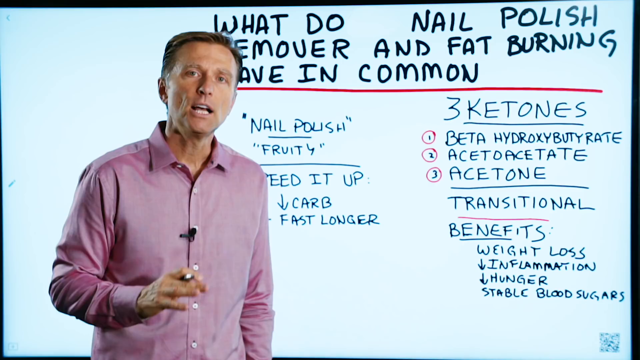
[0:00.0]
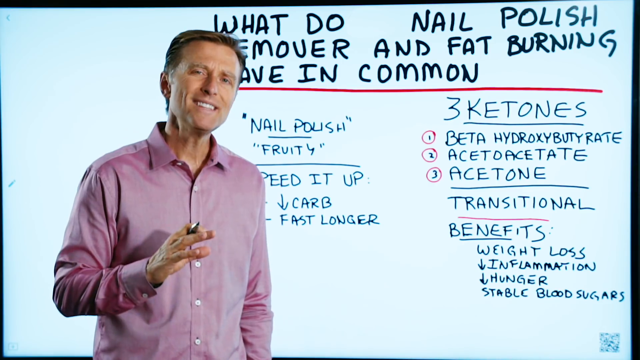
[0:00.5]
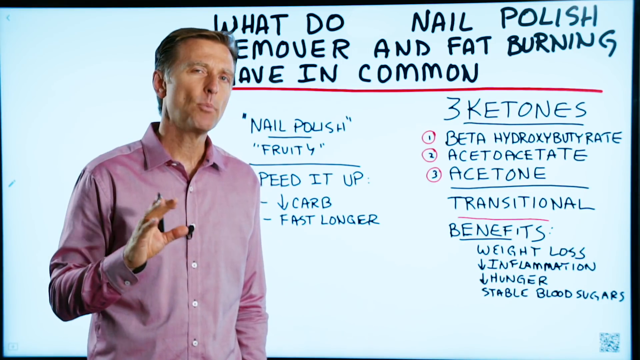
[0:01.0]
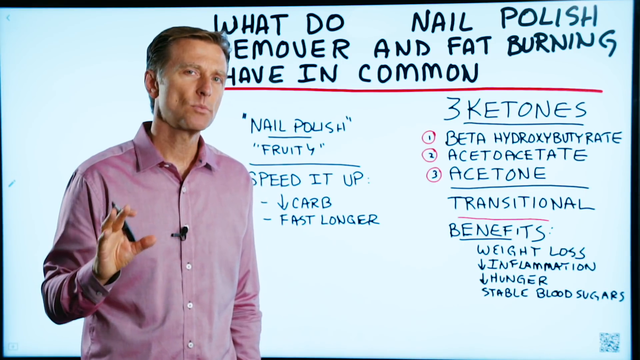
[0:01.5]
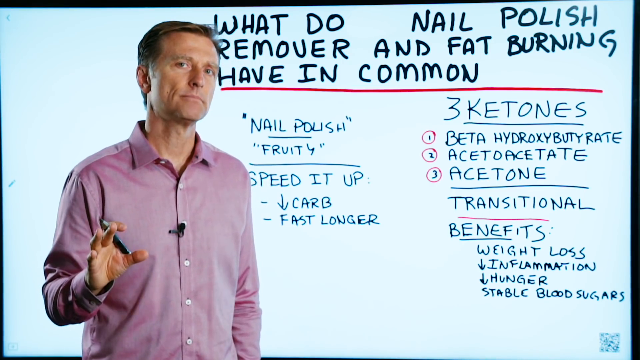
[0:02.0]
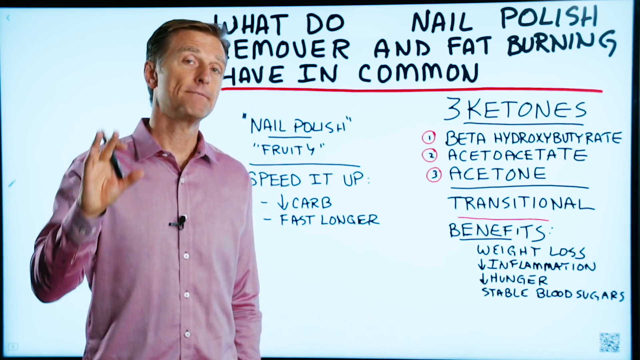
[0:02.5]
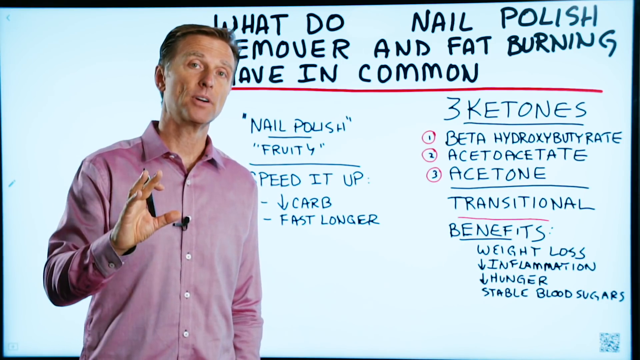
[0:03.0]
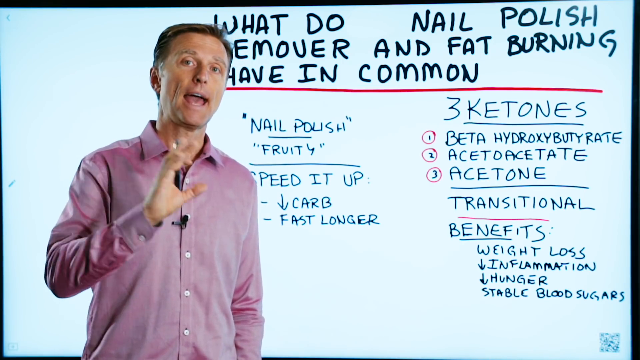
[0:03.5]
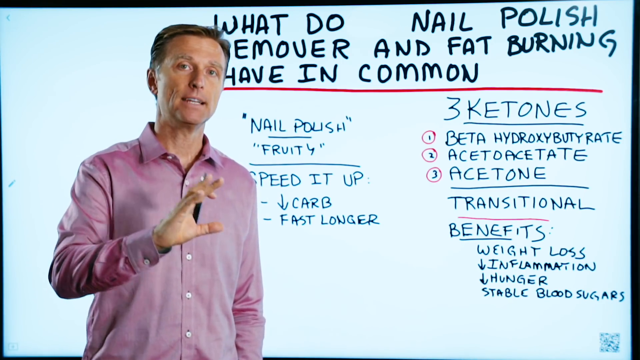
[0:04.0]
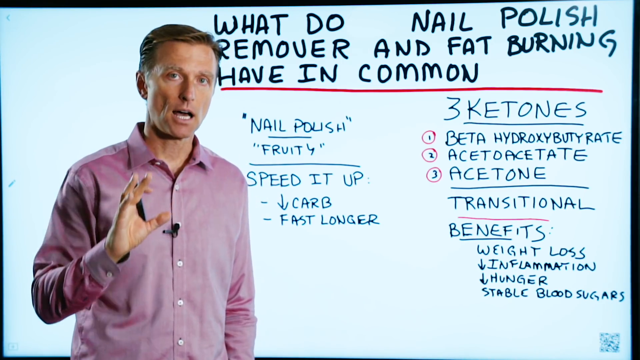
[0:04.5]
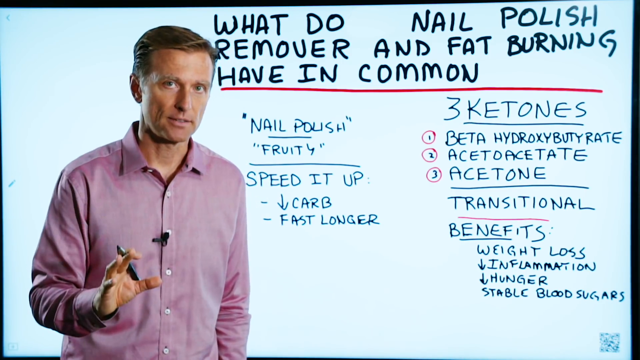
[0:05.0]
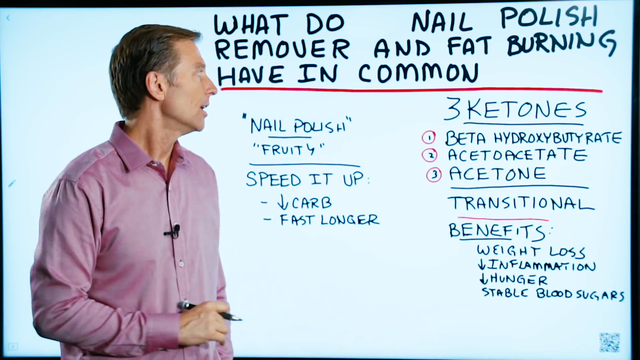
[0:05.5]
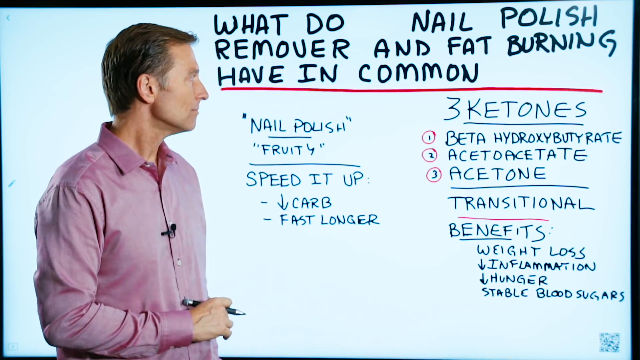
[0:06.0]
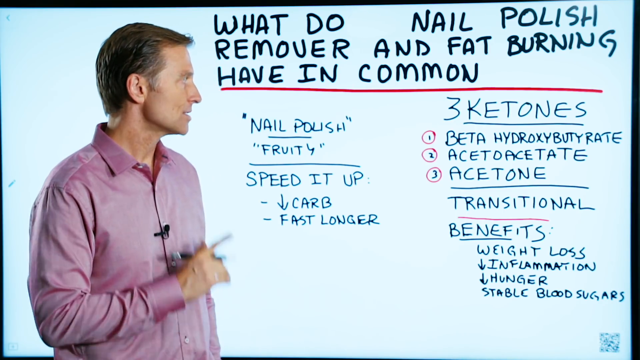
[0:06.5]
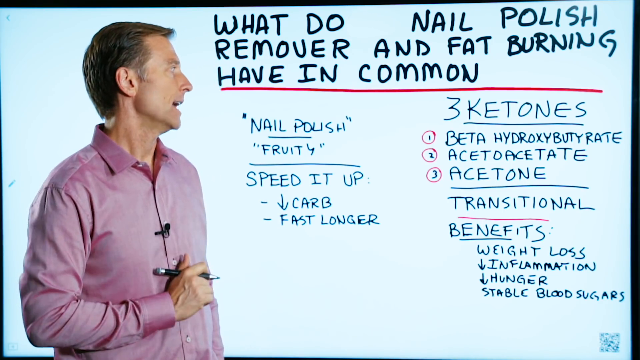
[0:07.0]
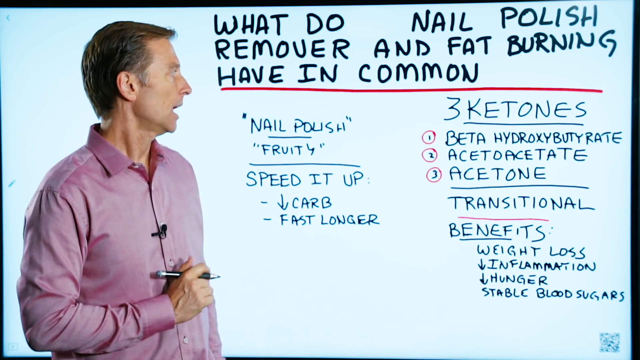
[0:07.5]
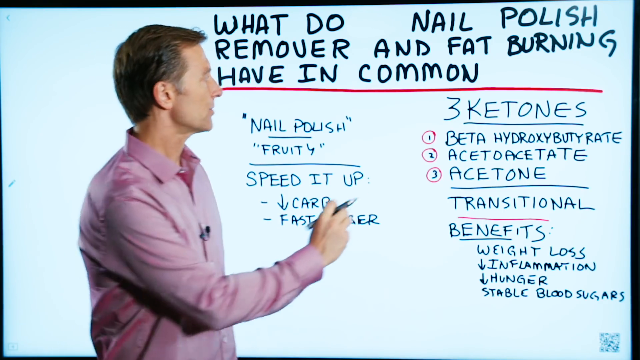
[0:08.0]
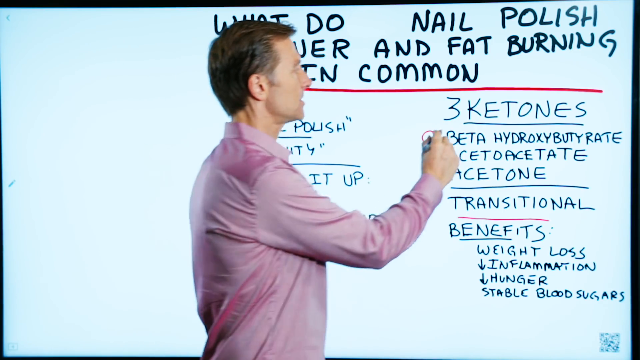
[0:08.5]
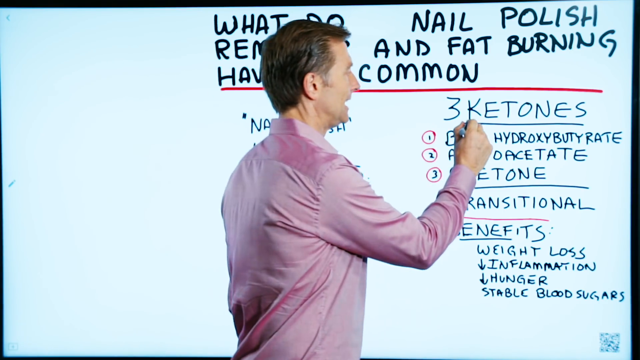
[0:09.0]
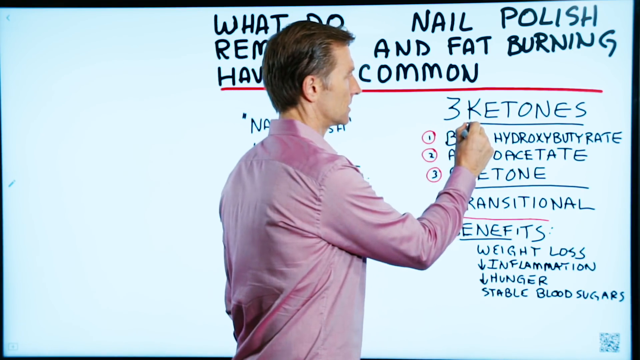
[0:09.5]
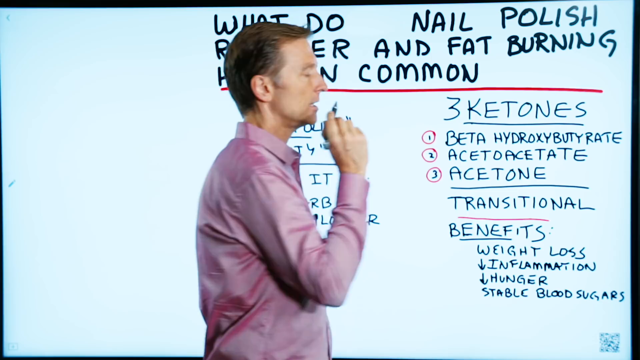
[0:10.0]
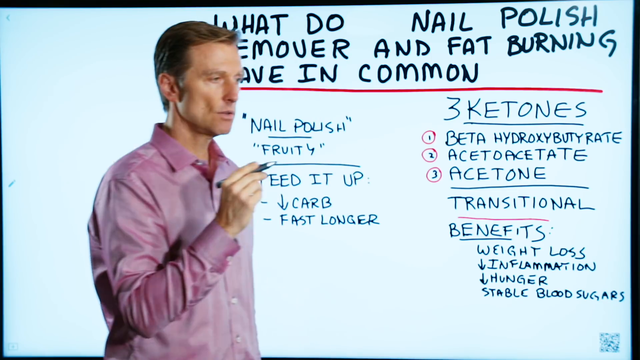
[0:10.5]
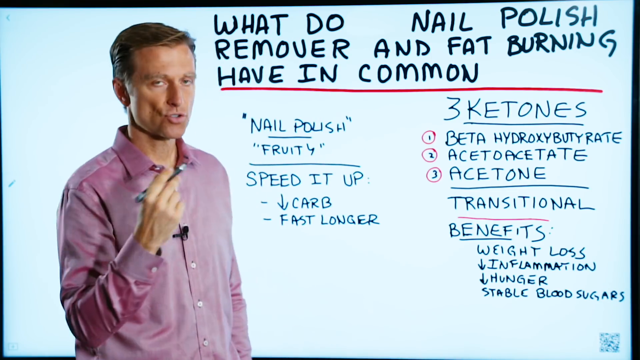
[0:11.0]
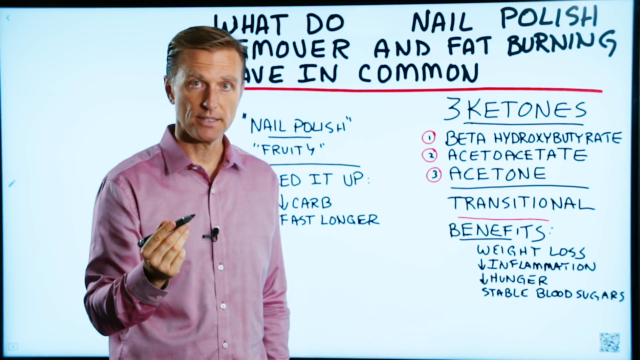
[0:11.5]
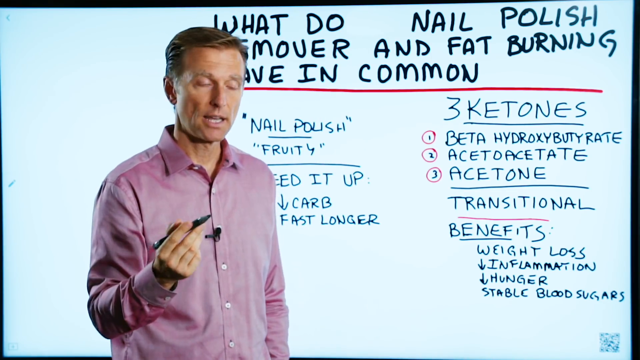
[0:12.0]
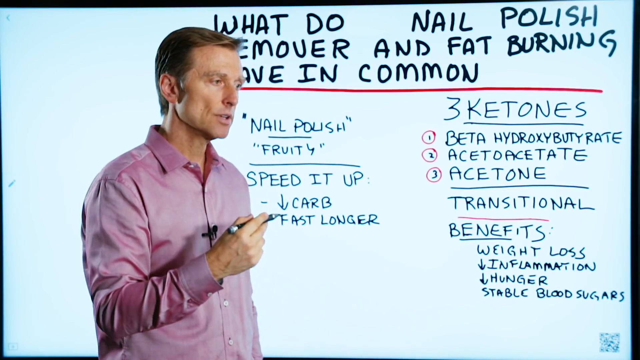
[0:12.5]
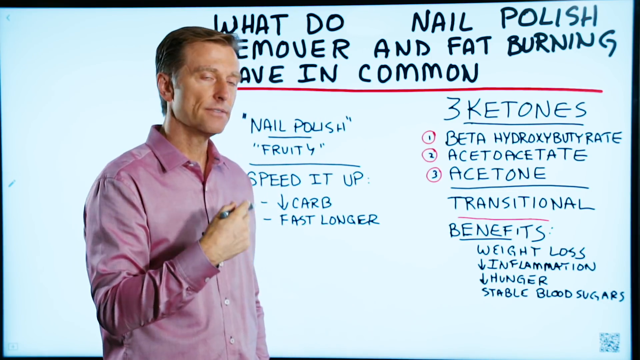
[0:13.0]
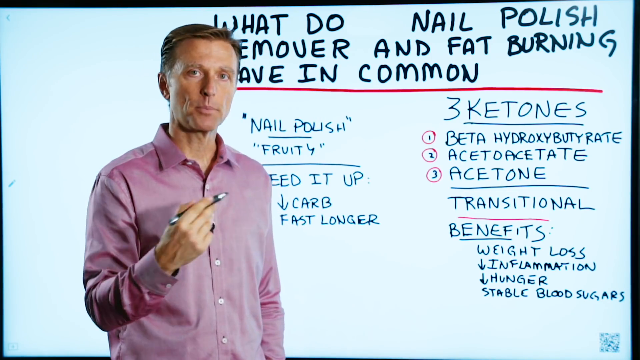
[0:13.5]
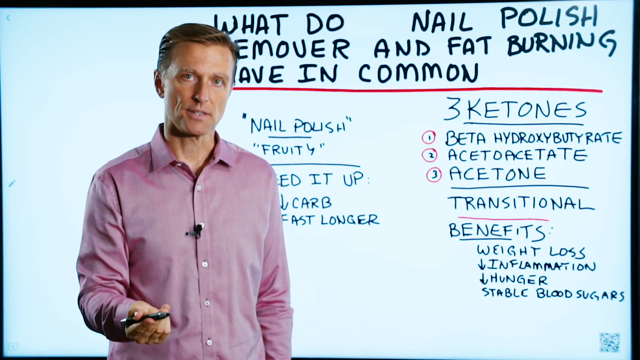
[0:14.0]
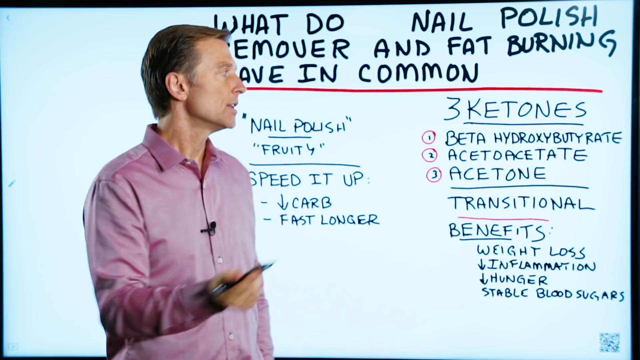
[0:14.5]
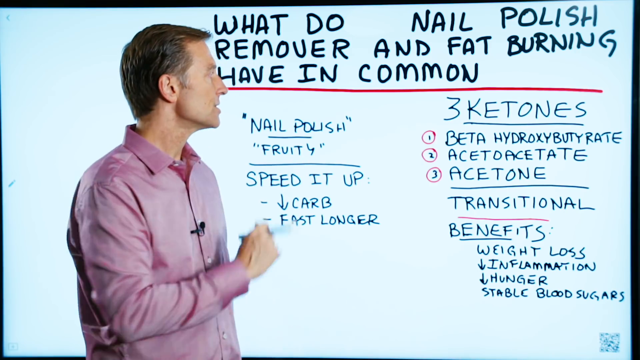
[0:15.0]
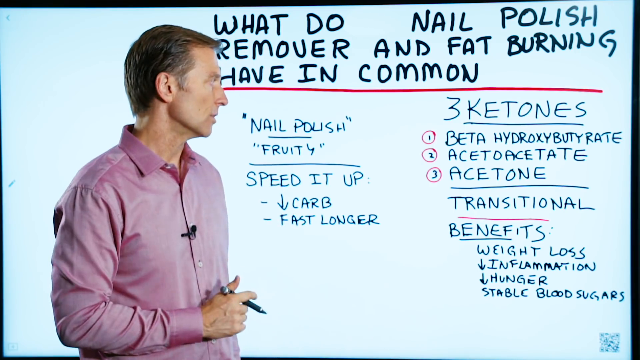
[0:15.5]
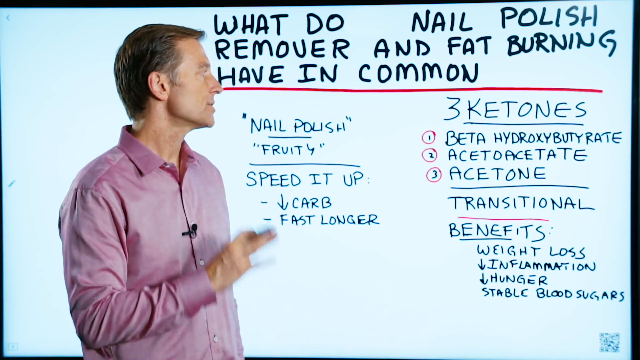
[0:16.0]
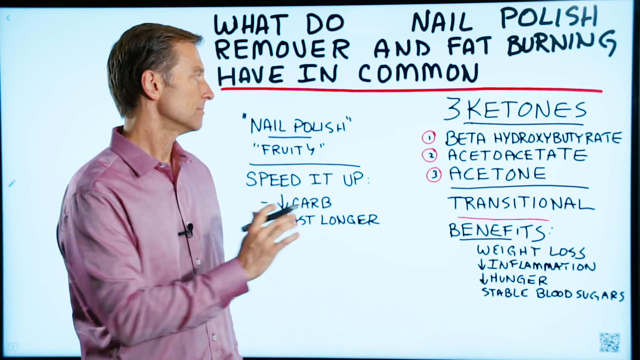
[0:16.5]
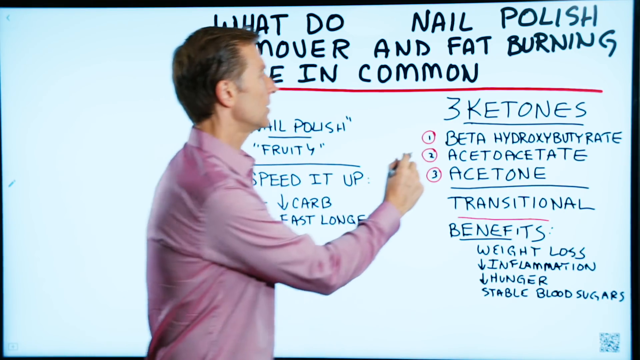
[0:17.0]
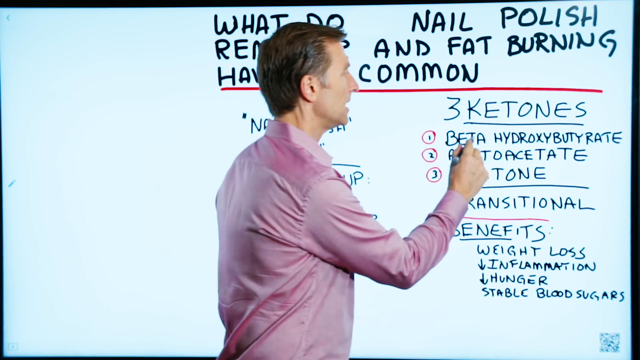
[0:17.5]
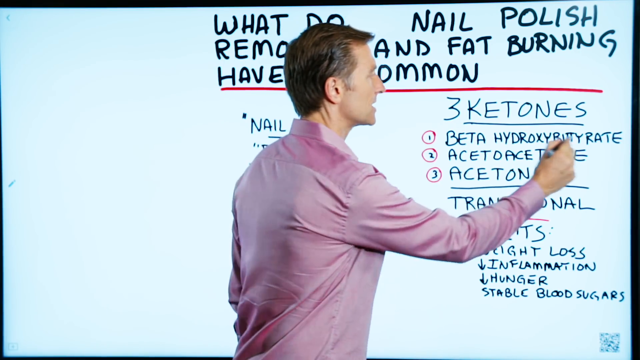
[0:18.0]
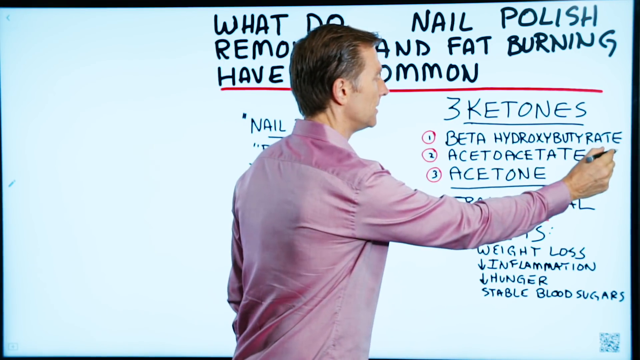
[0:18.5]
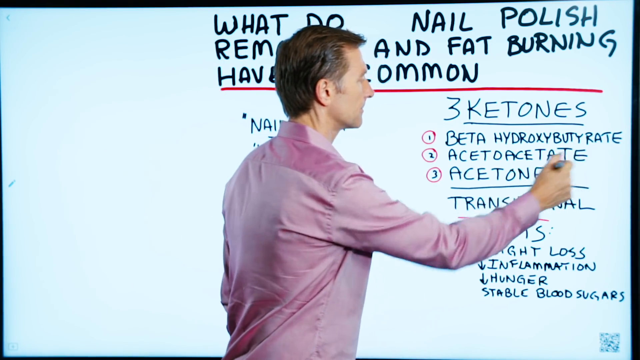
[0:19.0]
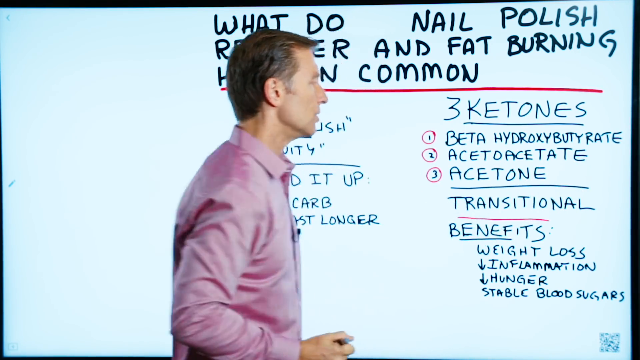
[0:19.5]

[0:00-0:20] A Caucasian man, presumably in his late 40s or early 50s, wears a long-sleeved dark pink button-up shirt with a small mic attached where the buttons are. He is in front of an electronic whiteboard with notes regarding nail polish, and text reads "what do nail polish remover and fat burning have in common?" Giving a presentation, he waves his right hand, which holds a pen, then turns to the board and points at "beta-hydroxybutyrate", pulls back, and goes back to it again. The whiteboard is divided into two sections: the left side starts with nail polish, and the right side starts with three ketones. His hair is combed, he is presented very professionally, and he looks passionate and adamant about the subject.